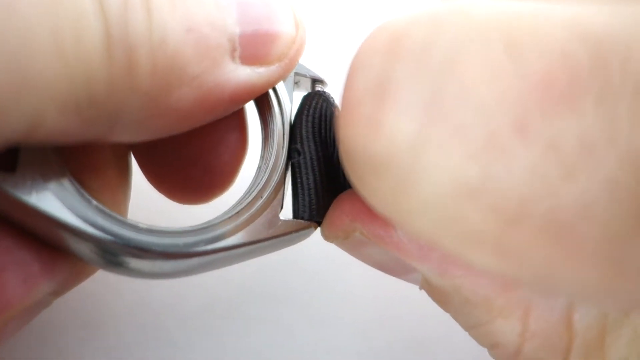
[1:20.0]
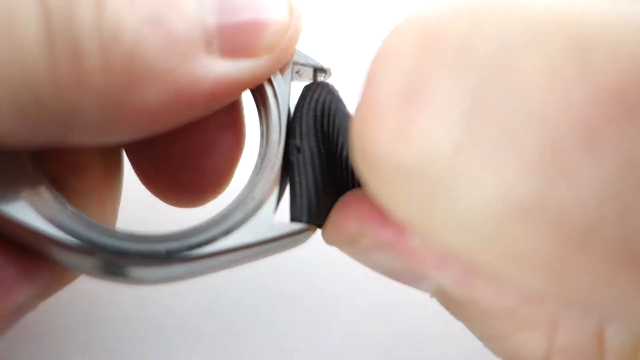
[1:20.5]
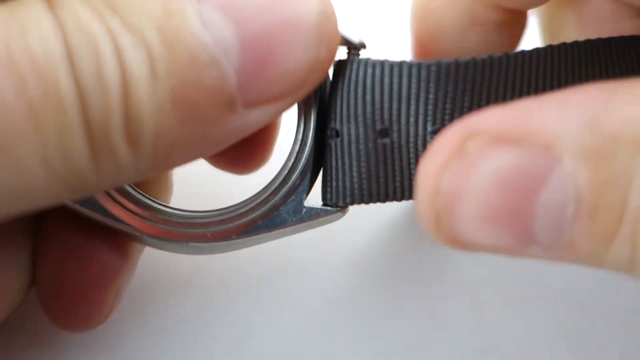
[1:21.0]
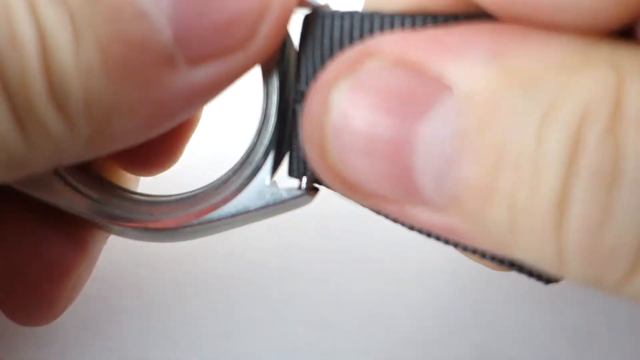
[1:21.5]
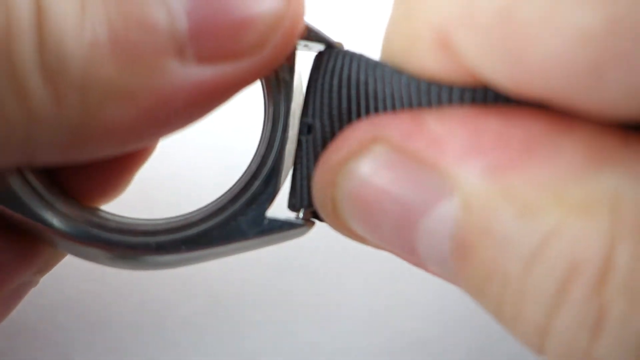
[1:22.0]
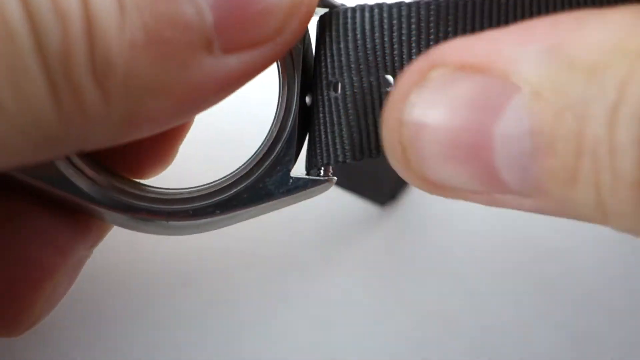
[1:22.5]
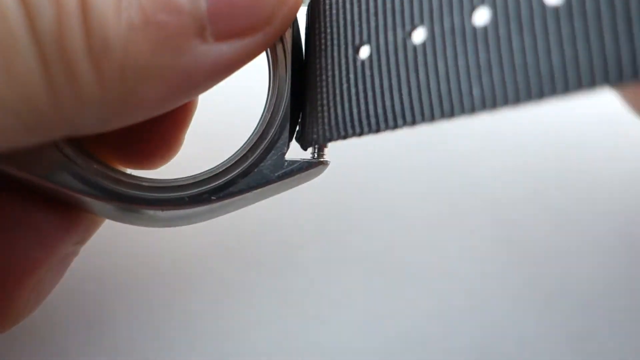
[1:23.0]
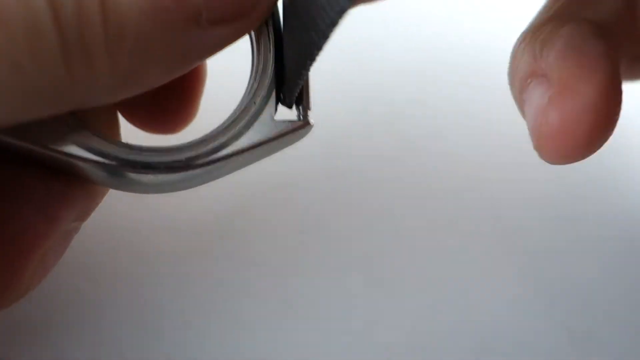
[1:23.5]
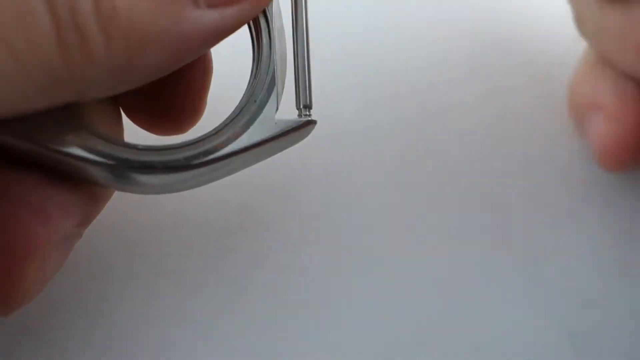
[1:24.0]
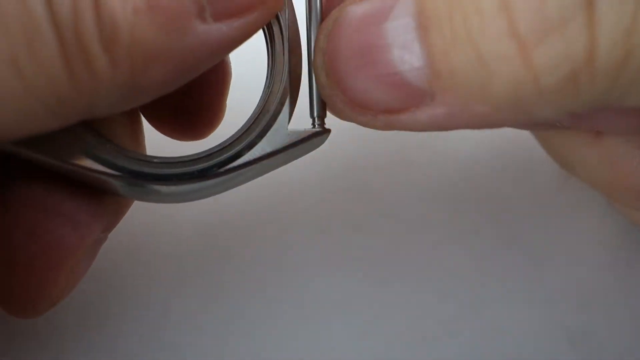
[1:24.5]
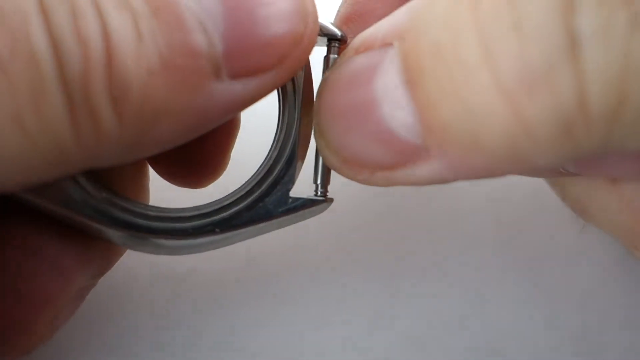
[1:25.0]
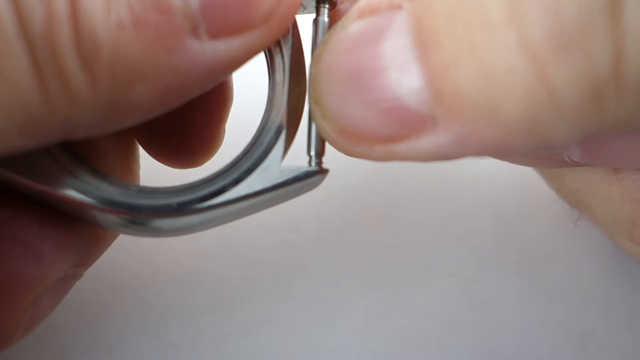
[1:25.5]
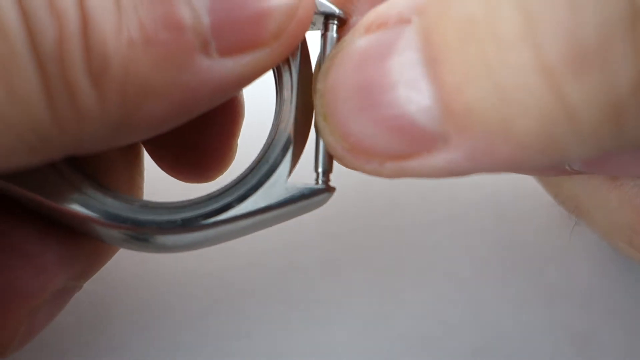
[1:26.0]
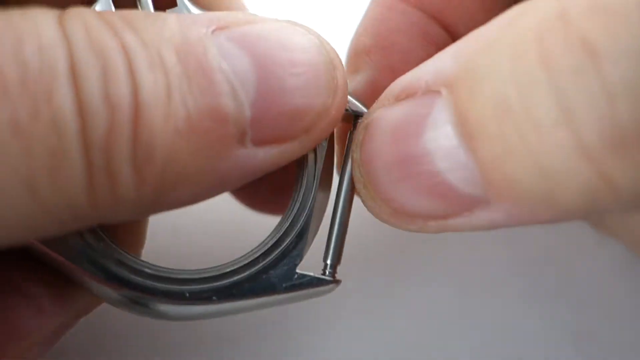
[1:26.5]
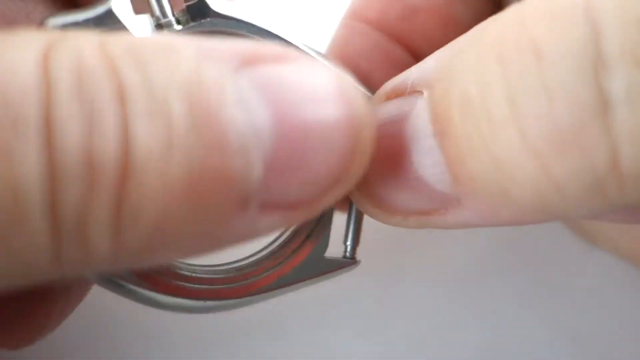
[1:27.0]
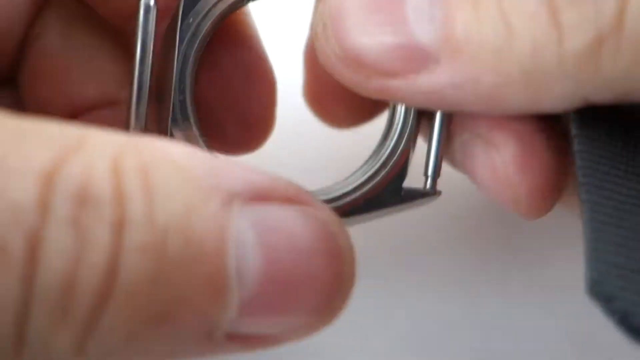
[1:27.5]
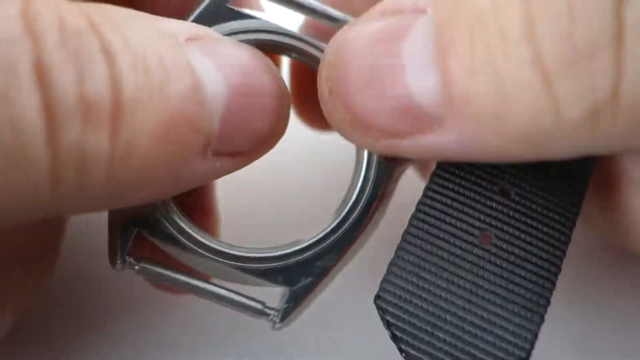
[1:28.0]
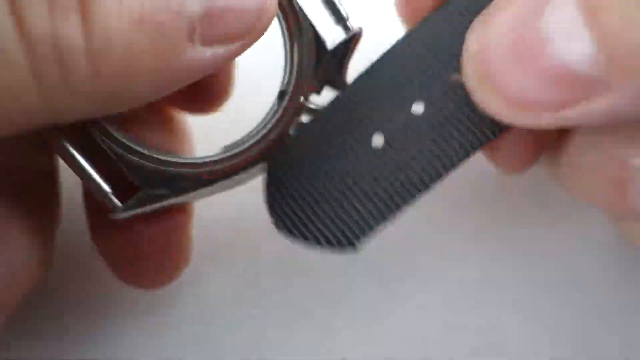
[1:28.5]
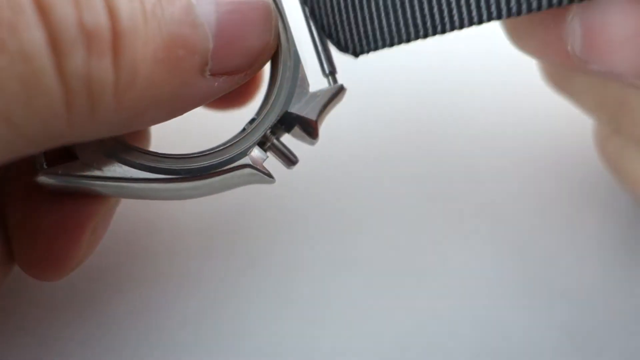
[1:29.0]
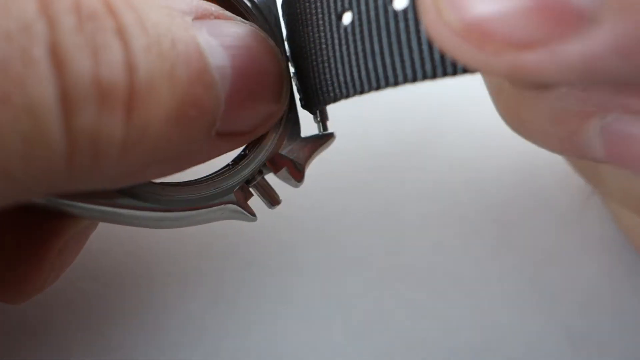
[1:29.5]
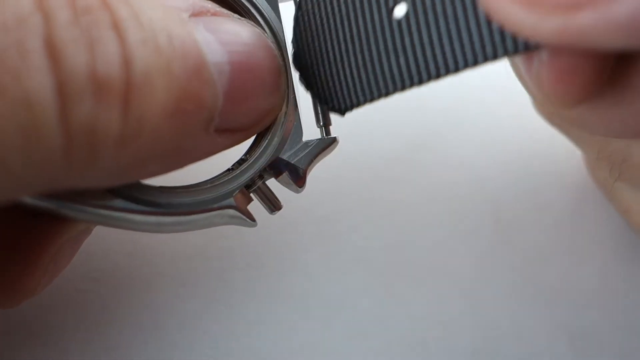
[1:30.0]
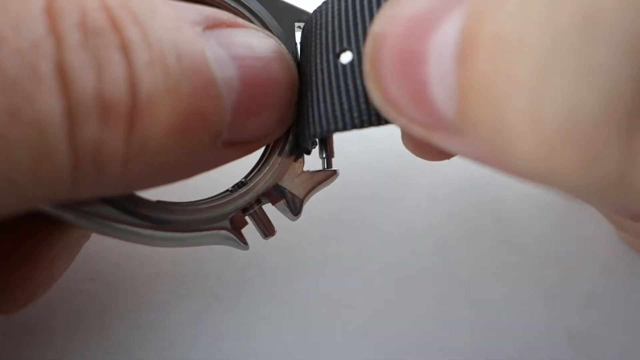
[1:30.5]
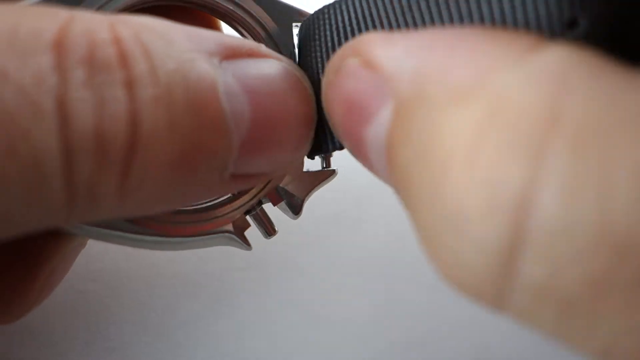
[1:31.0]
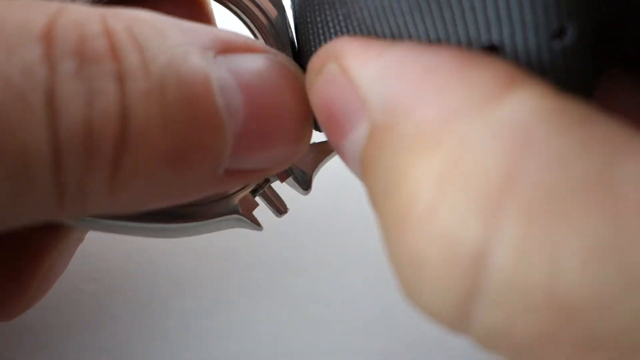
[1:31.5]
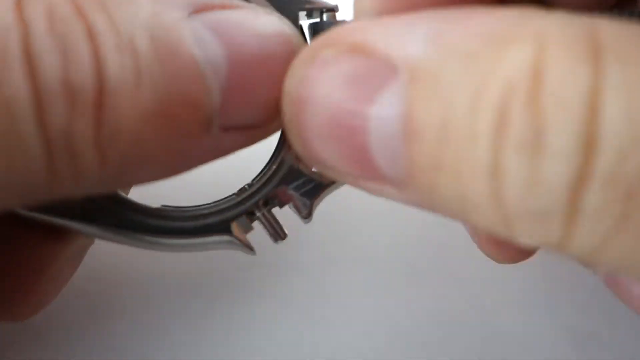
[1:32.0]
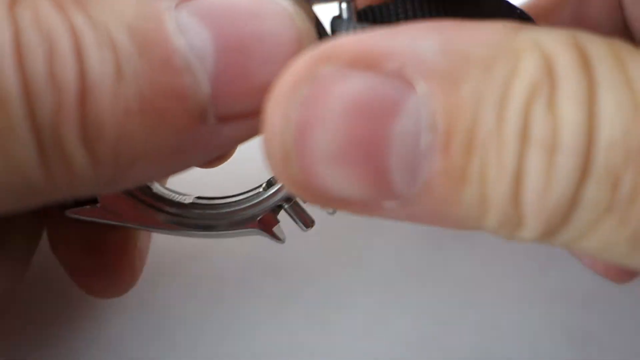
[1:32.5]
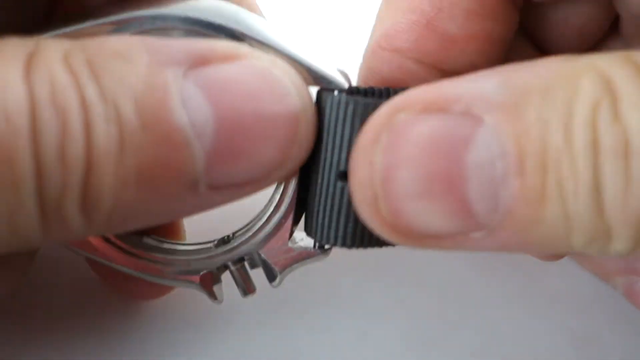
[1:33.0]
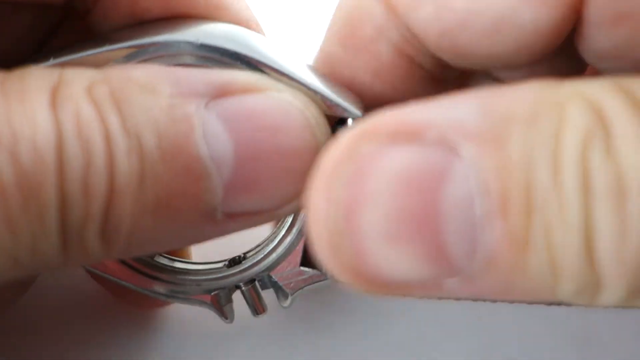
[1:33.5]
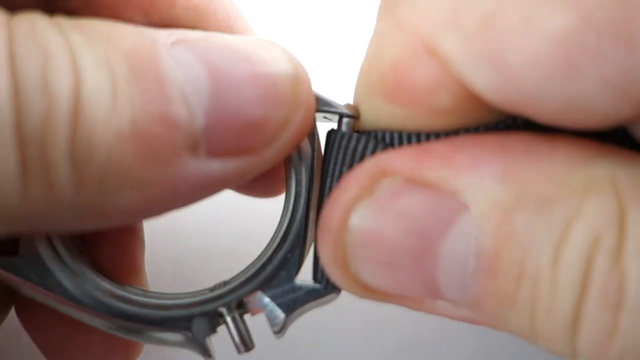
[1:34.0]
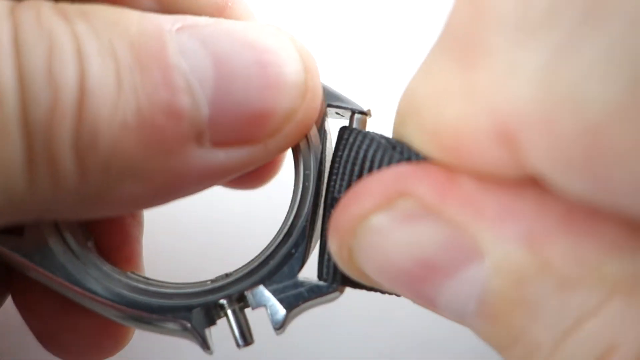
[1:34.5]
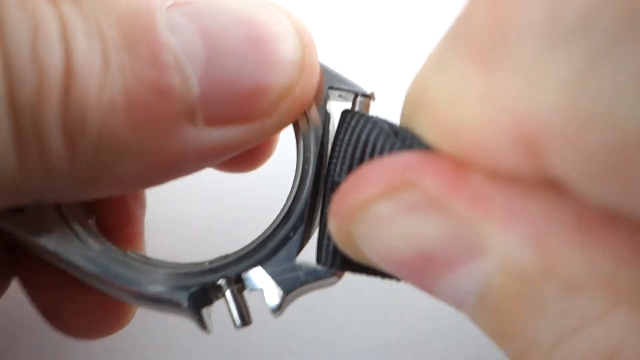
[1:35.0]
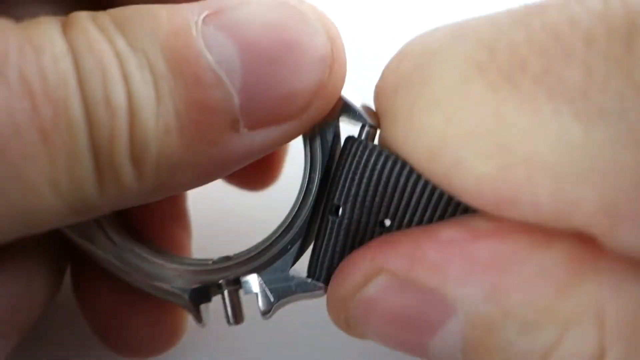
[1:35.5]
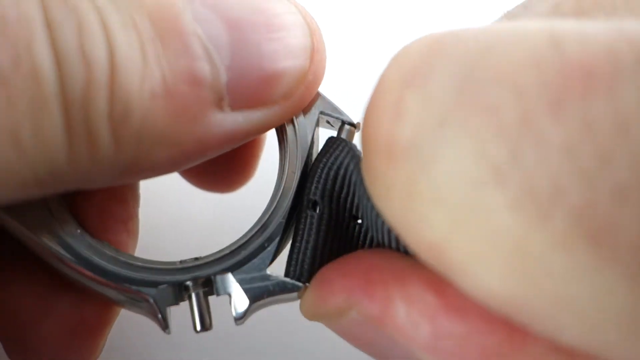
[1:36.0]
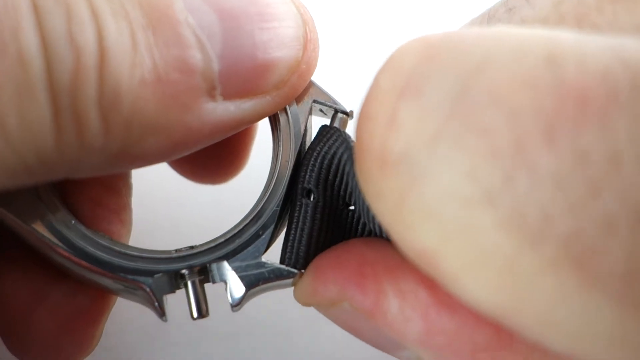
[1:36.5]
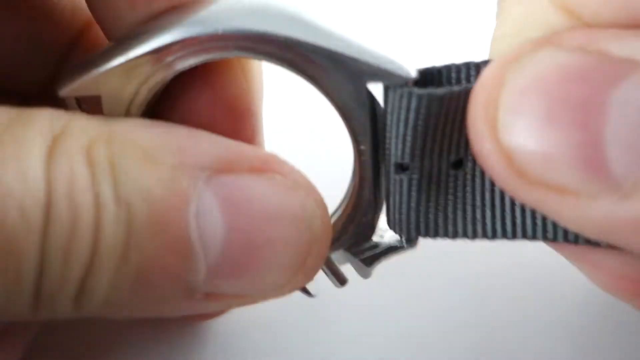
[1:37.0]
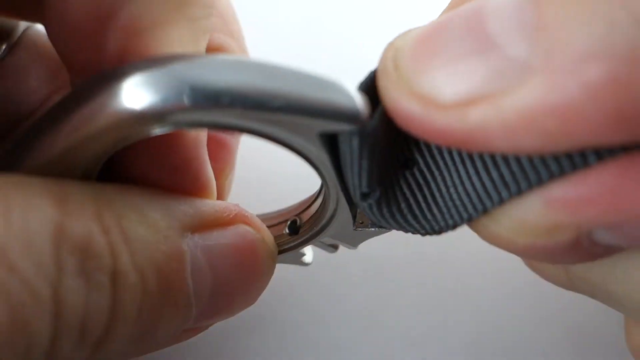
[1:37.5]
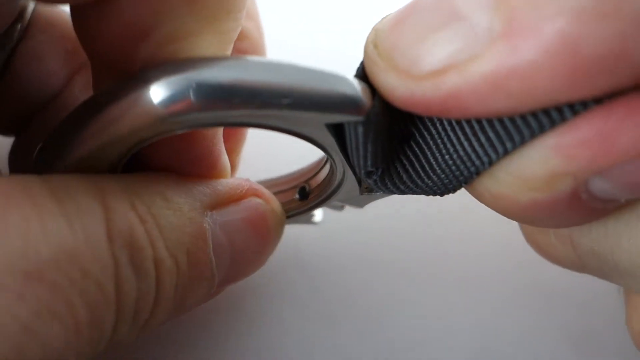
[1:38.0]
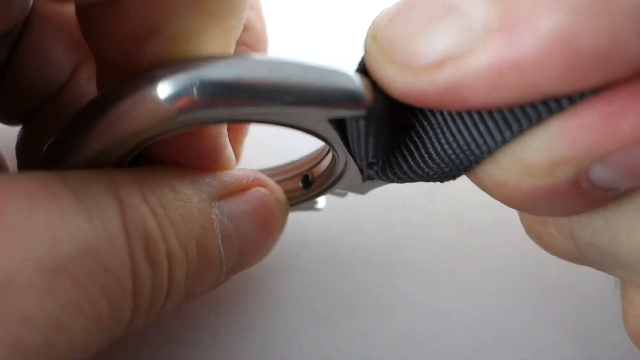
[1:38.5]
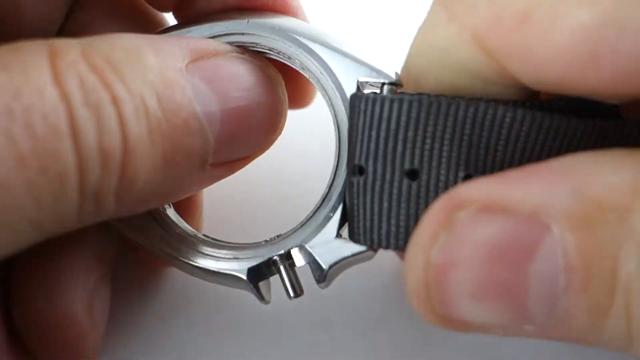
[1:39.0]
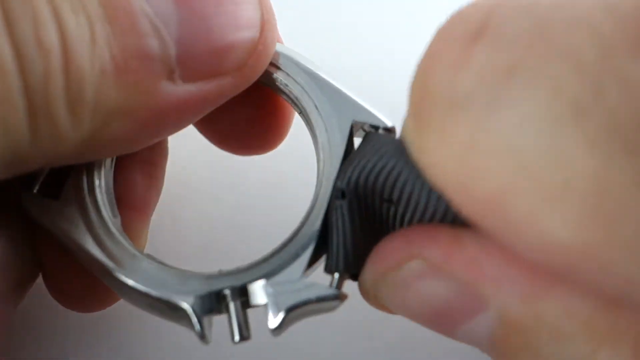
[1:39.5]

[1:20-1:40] The watch face takes up half of the left side of the screen. On the right-hand side, the person holds the black watch strap, pinching it between thumb and finger. They twist and turn the strap, let go of it, hold it again, and pull it back through the gap. On the left-hand side, only fingers and a thumb holding the watch face remain; the strap is no longer attached to the face. They turn the watch face around so the left side is now on the right side, bring their fingers back over to the watch face from the middle right of the screen toward the left, and begin to pull the watch strap back through the gap.